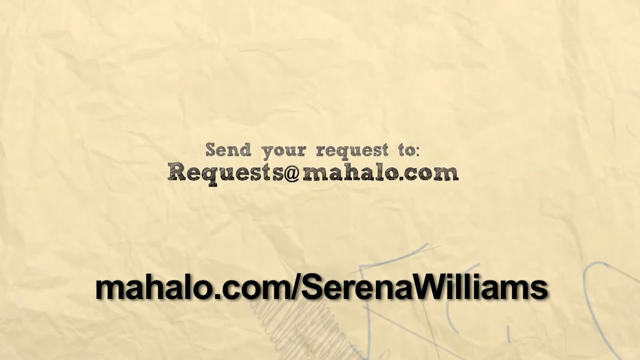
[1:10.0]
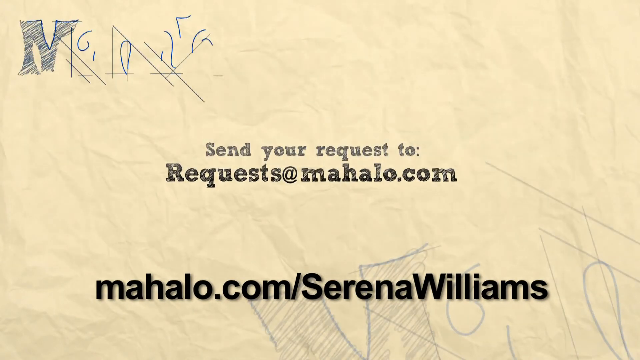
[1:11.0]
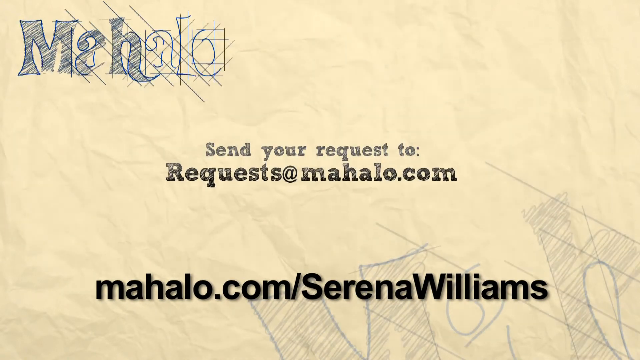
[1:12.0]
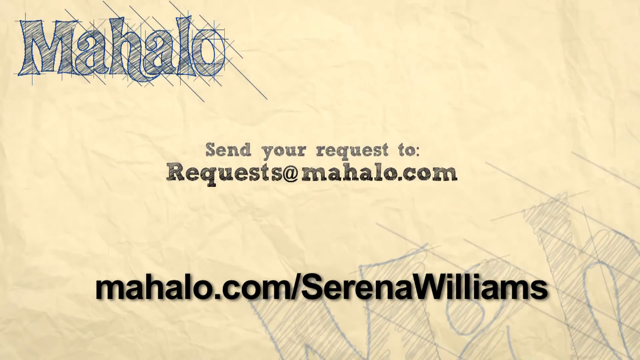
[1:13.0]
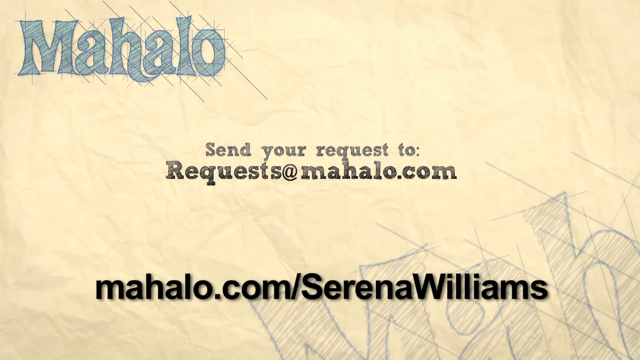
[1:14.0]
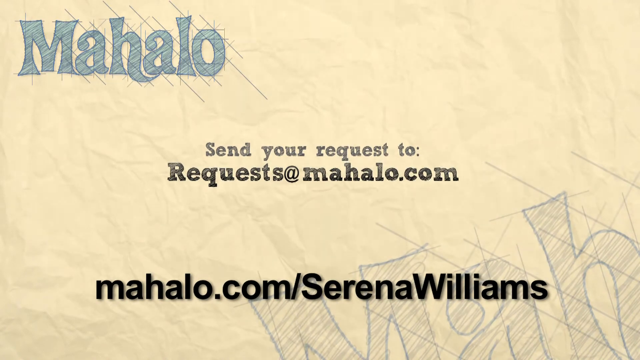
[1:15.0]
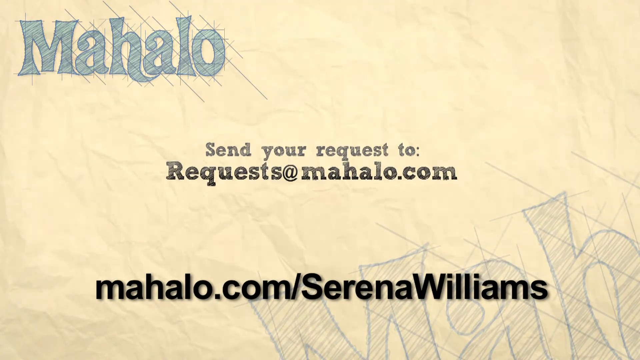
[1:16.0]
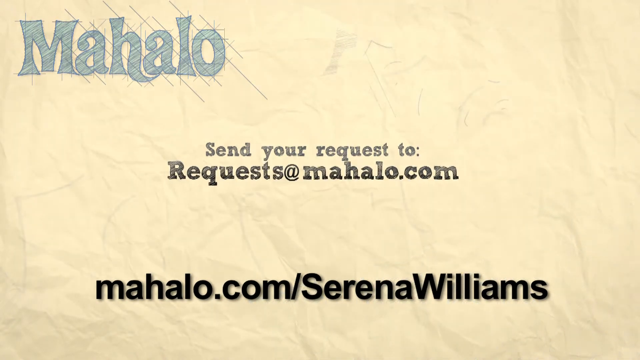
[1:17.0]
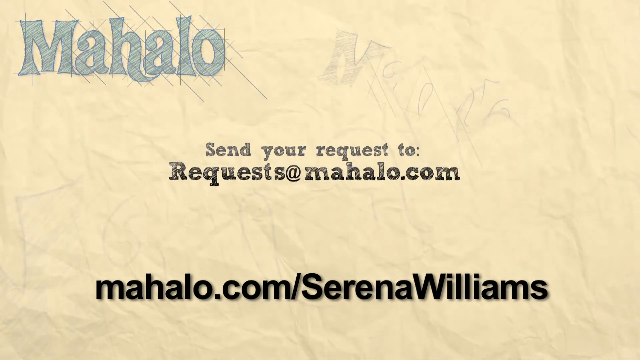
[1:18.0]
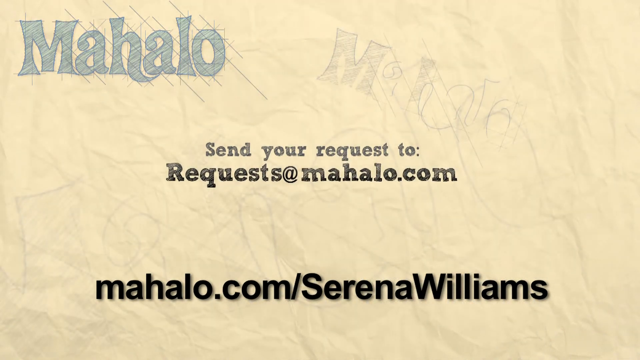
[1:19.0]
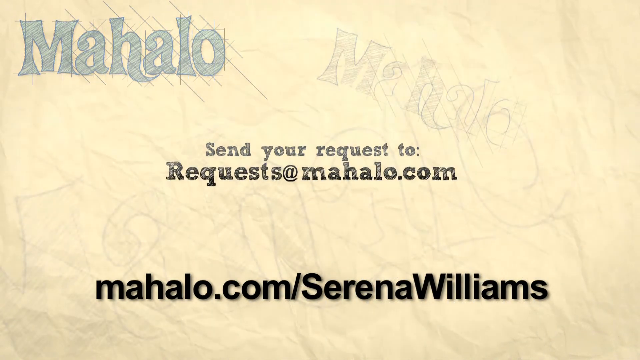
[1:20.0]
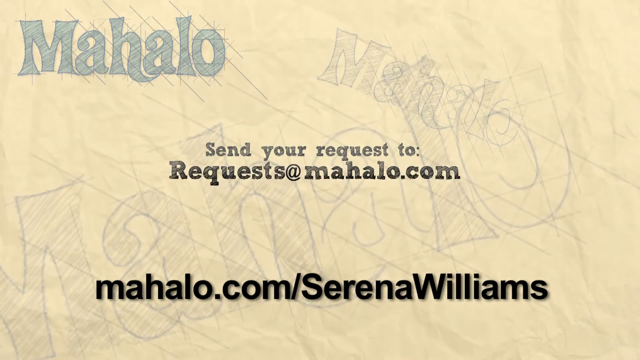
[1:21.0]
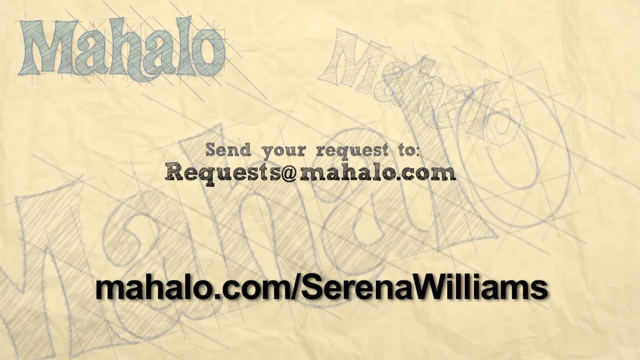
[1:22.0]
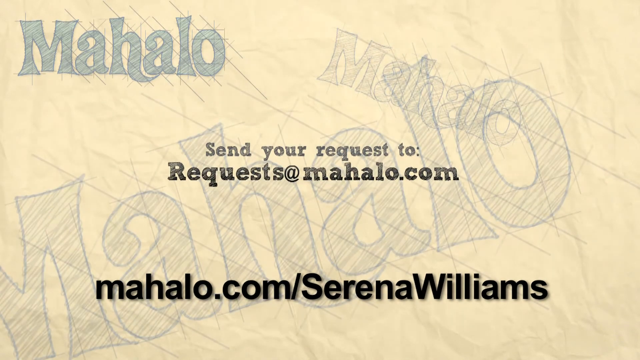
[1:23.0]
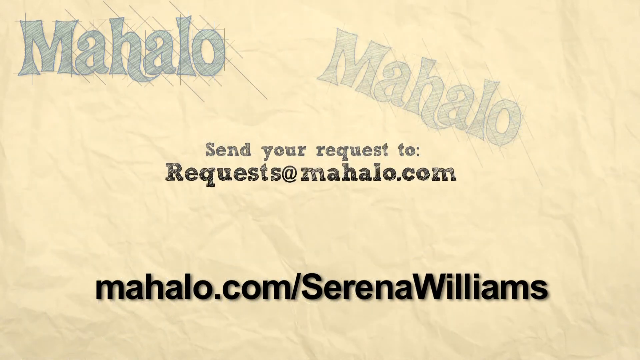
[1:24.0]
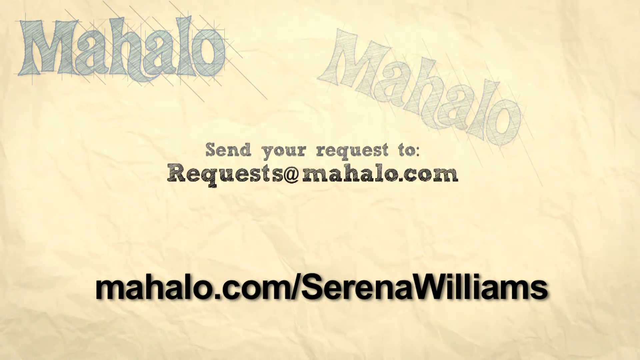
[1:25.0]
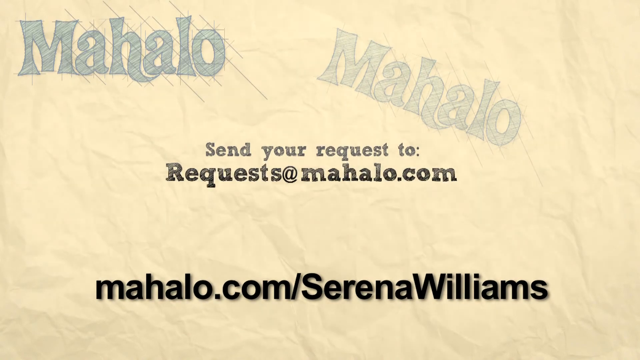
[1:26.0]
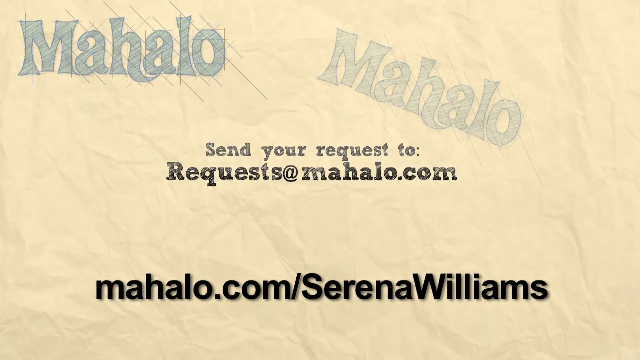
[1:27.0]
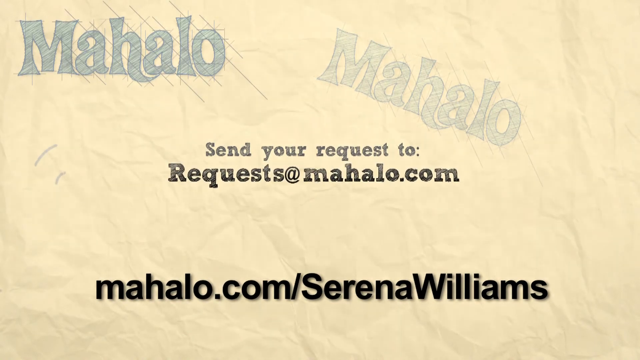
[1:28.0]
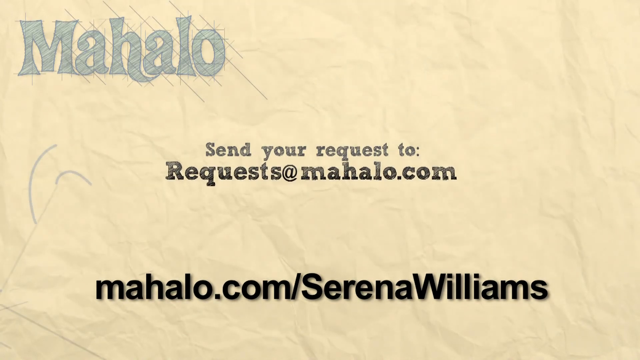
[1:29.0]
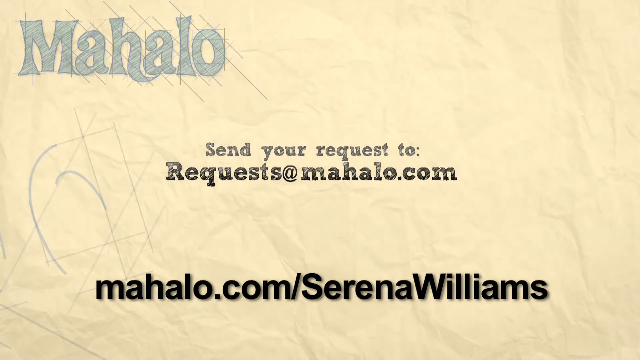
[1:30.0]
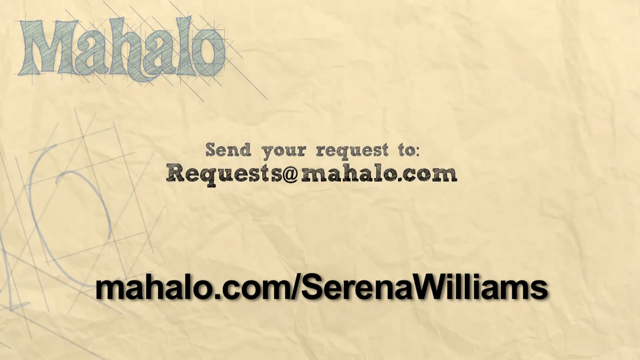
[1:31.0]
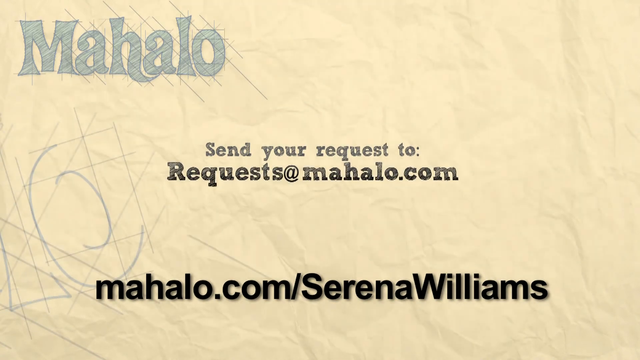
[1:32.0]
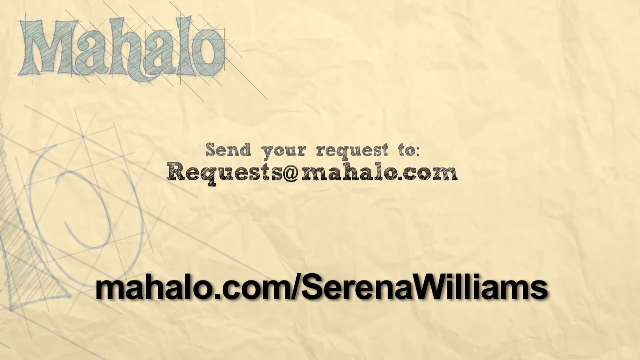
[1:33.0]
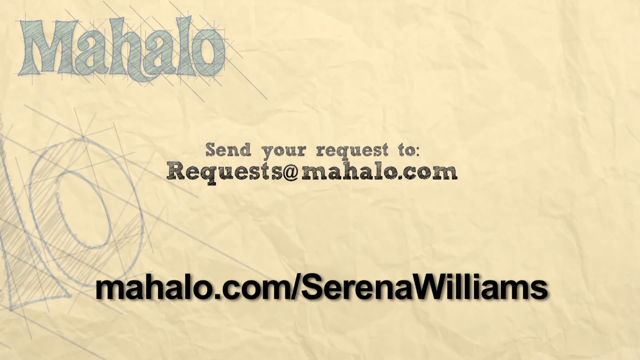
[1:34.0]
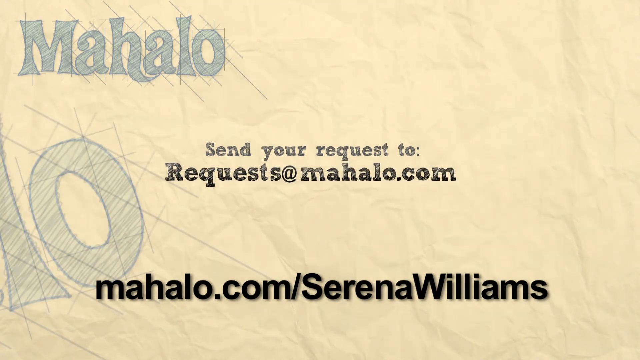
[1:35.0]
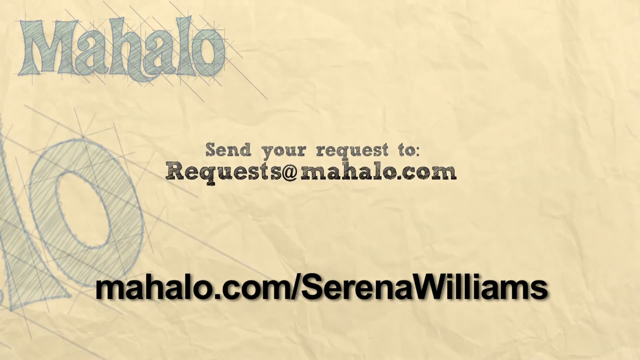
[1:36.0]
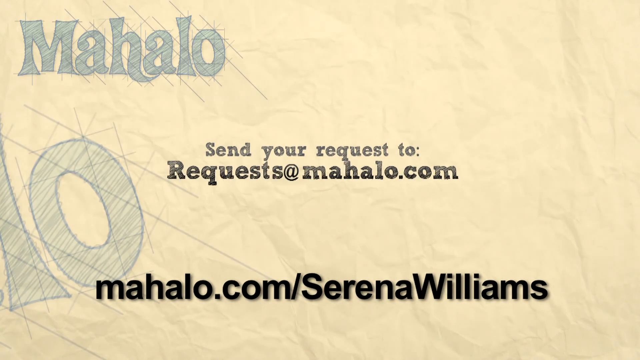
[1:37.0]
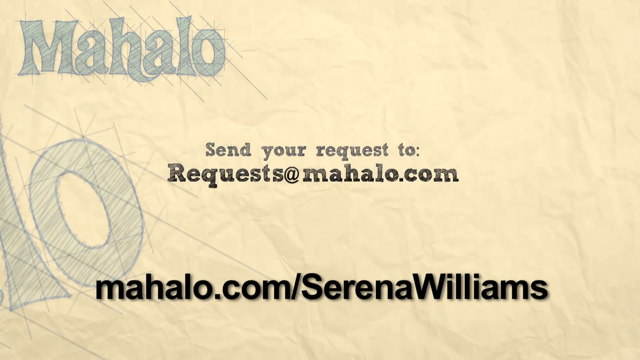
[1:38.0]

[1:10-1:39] A new article on Mahalo reports that Serena Williams is back home after blood clot treatment. It reads: "Serena Williams is recovering at her Los Angeles home after undergoing emergency treatment for a blood clot in one of her lungs, the former World No. 1 confirmed on Wednesday. This has been extremely hard, scary, and disappointing, Williams said." It continues: "Serena did indeed suffer from a pulmonary embolism last week, and the hematoma was another unexpected scare, Chabot said. Thankfully, everything was caught in time. With continued doctor visits to monitor her situation, she is recuperating at home under strict medical supervision. Williams has not played competitively since winning last year's Wimbledon championship. Shortly after the victory, she cut her foot on broken glass at a restaurant in Germany. The American has had two operations on her foot since then, and was prepared to return to training soon in the hope of making a comeback in Miami later this month." Further text reads: "Williams has won 13 Grand Slams single titles, but has slipped from No. 1 to 11th on the world rankings during her extended absence, and now faces an uncertain future." A quote from Williams begins "I know I will be okay" and includes "I hope to be back by the early summer. That said, my main goal is to make sure I get there safely."